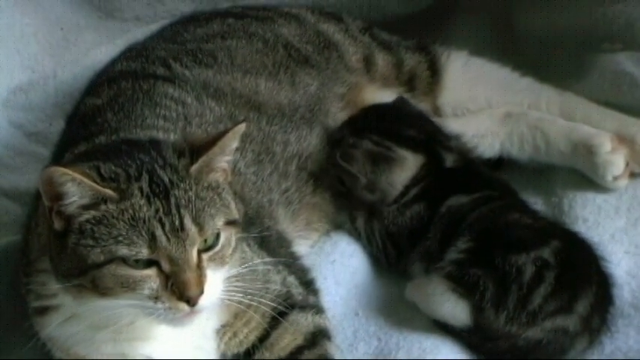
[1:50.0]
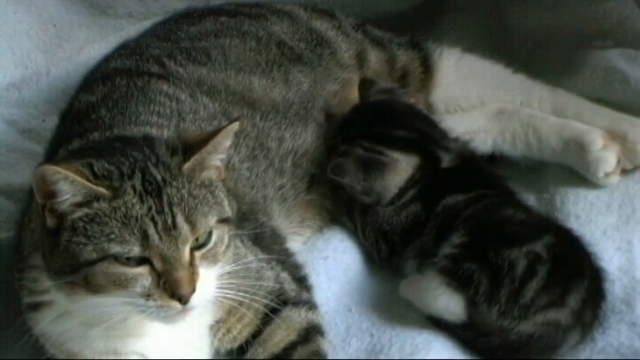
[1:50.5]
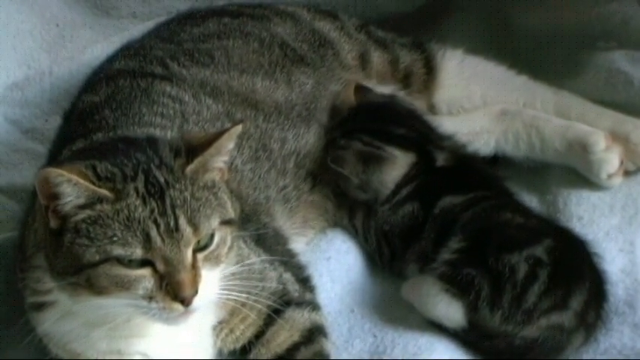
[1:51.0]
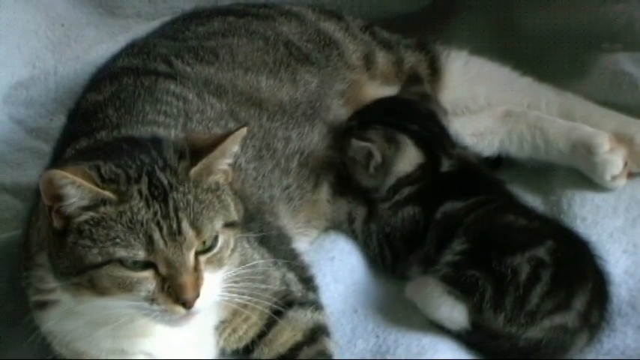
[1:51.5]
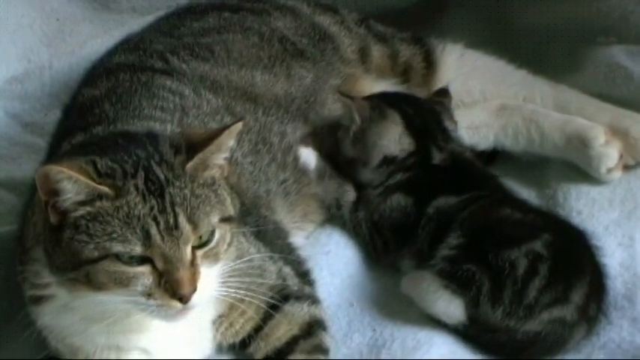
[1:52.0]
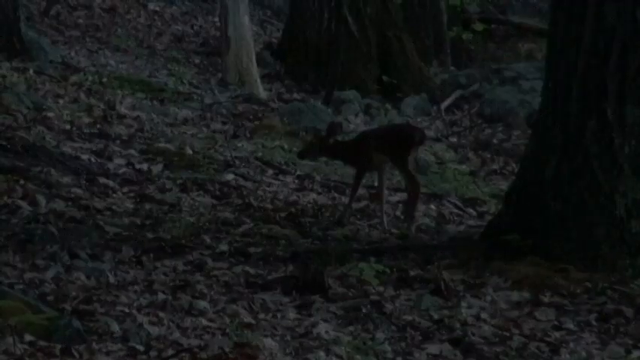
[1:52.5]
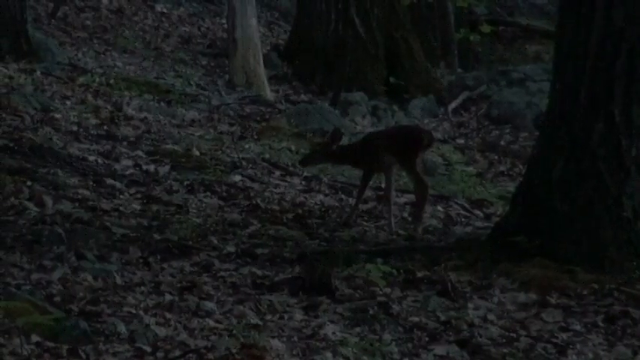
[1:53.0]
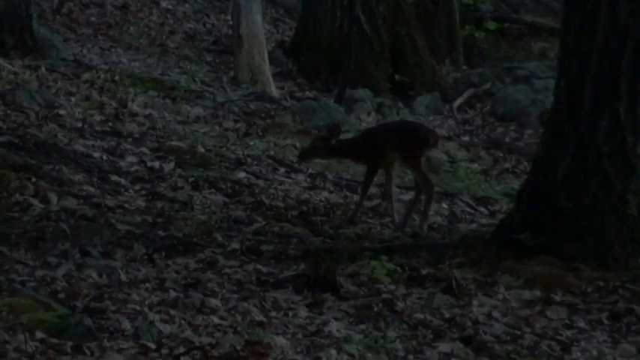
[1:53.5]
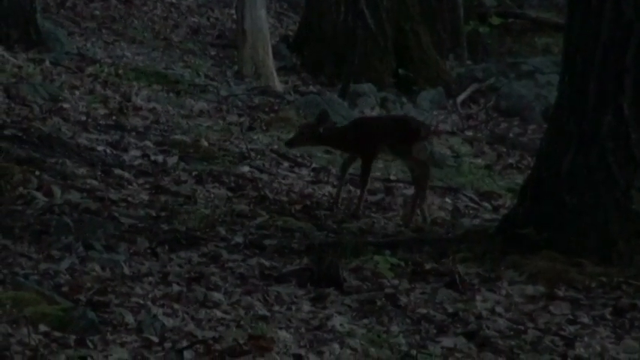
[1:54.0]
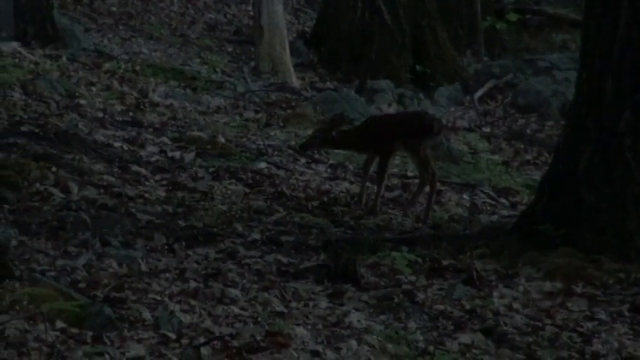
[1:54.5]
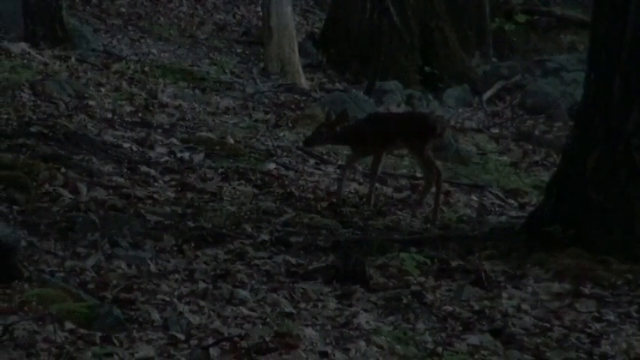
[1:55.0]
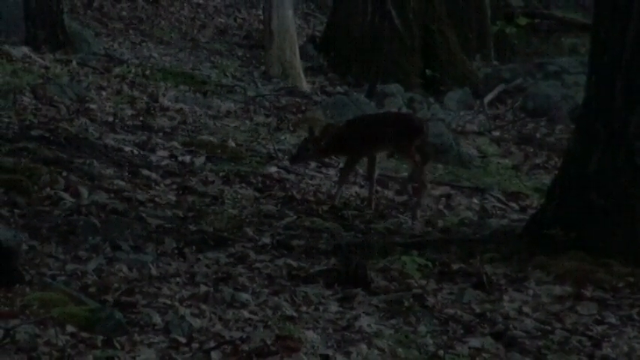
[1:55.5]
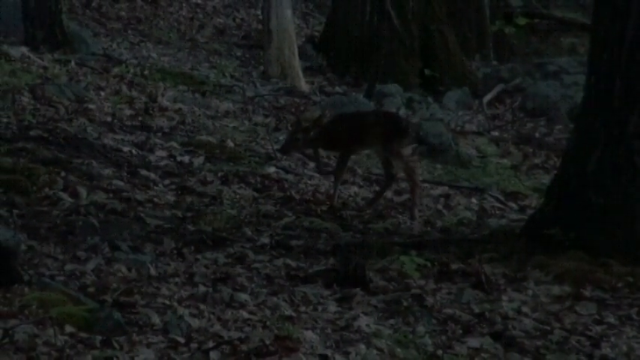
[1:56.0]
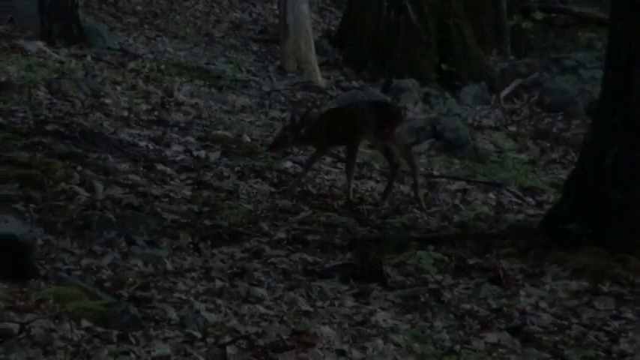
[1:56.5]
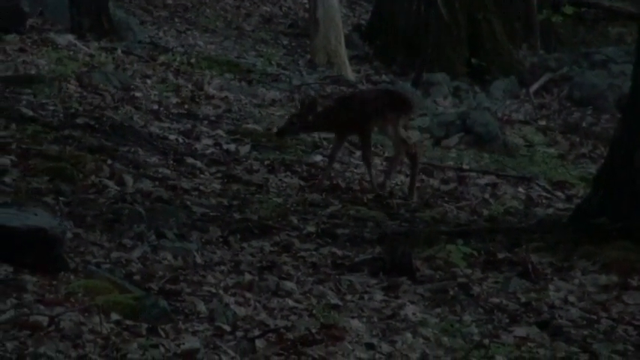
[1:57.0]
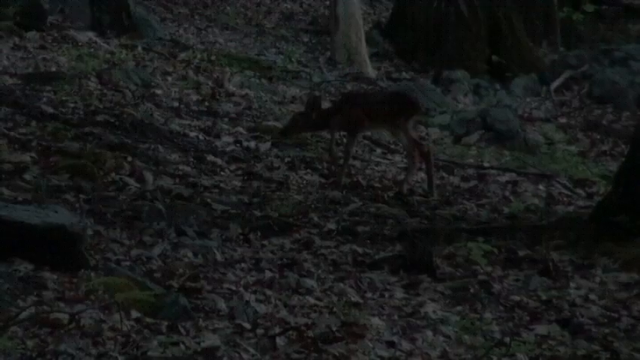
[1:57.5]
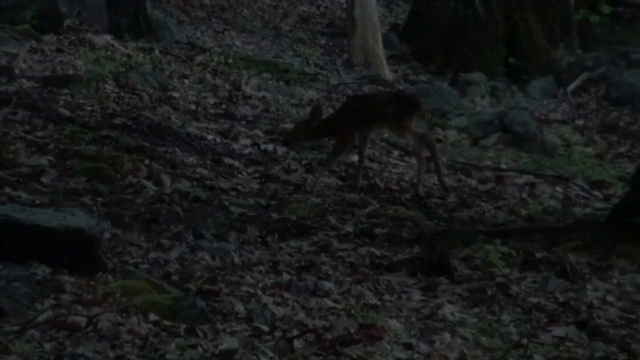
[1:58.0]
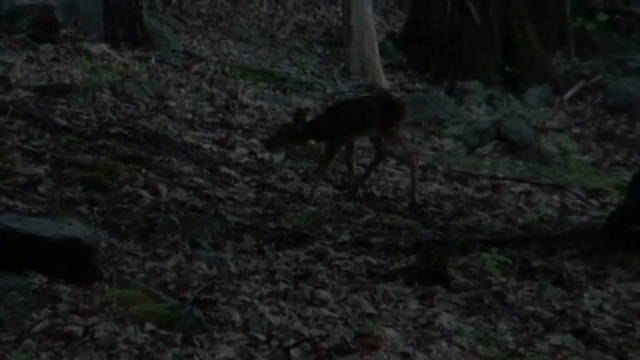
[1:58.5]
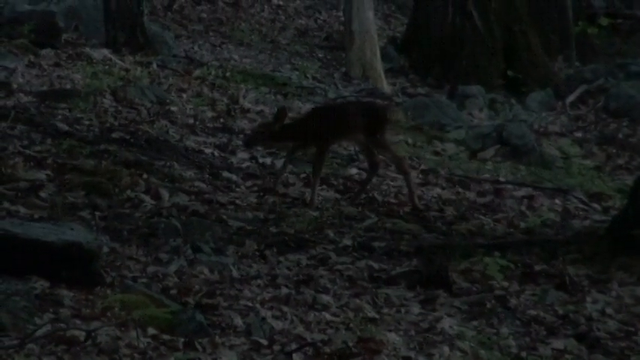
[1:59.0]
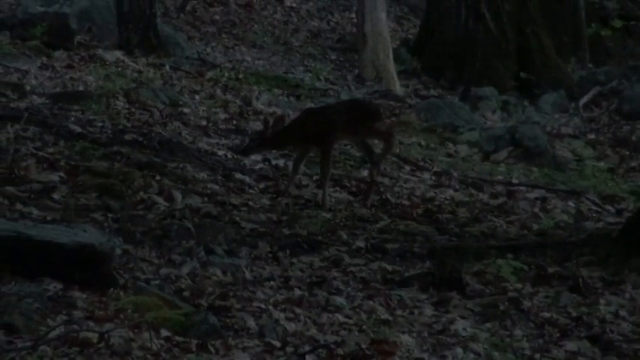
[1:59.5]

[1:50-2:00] The mother cat continues nursing her kitten. The kitten moves around a bit, moving his head as he adjusts to suck better, and uses his paws to knead his mother's belly. The mother cat seems relaxed throughout. The video then transitions to a night scene of what seems to be a forest, possibly the same one where the fox cub was seen, but a different area, again covered in dried leaves. What seems to be a young deer walks slowly and carefully around this night forest, alone.